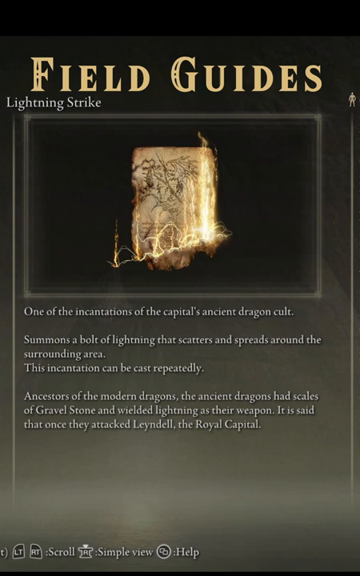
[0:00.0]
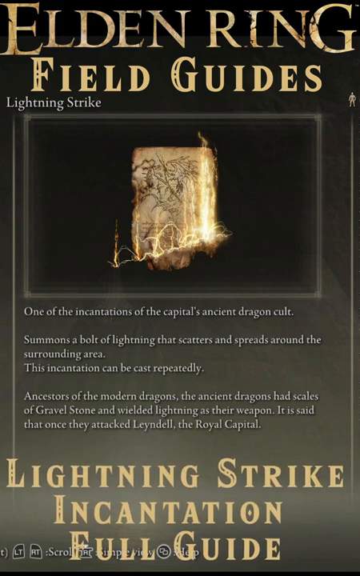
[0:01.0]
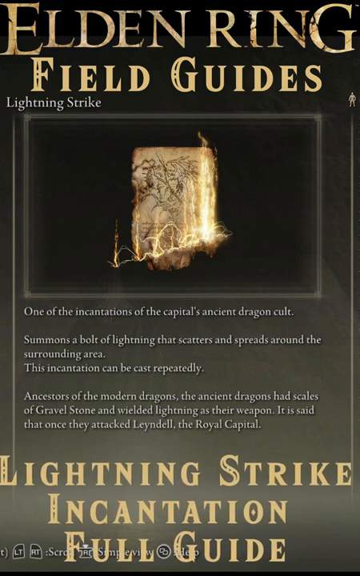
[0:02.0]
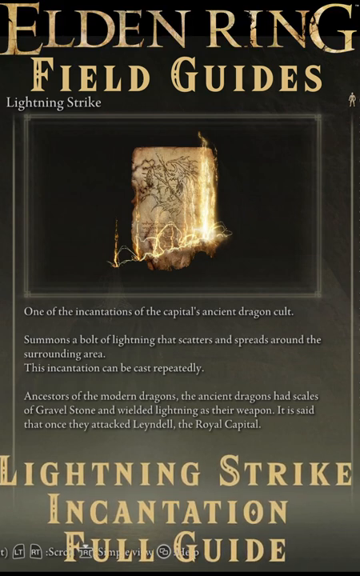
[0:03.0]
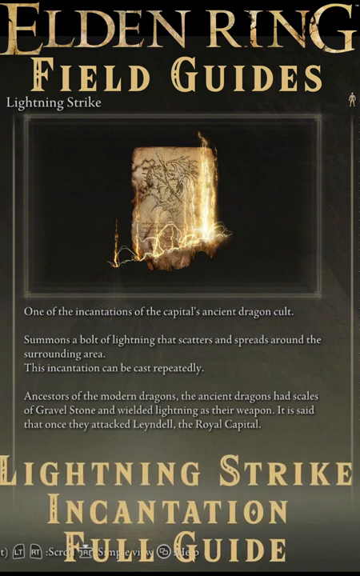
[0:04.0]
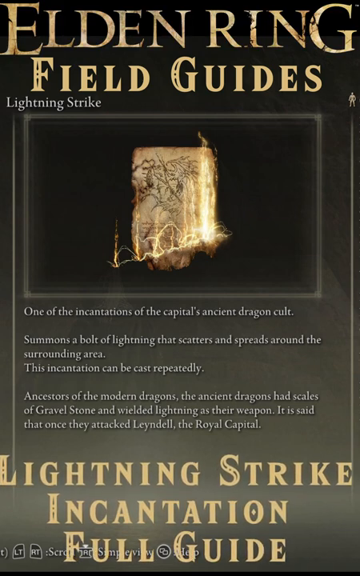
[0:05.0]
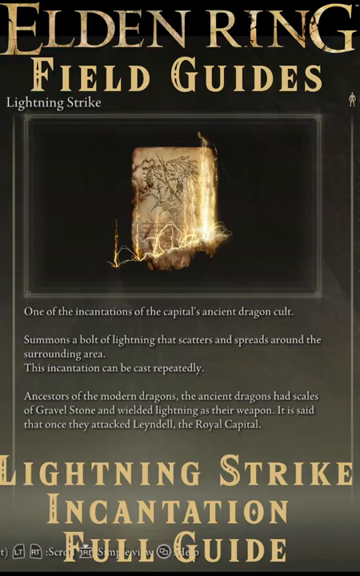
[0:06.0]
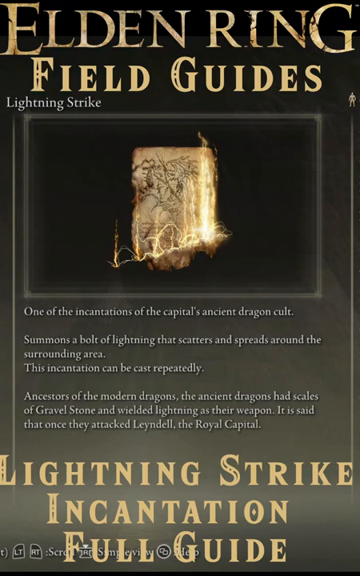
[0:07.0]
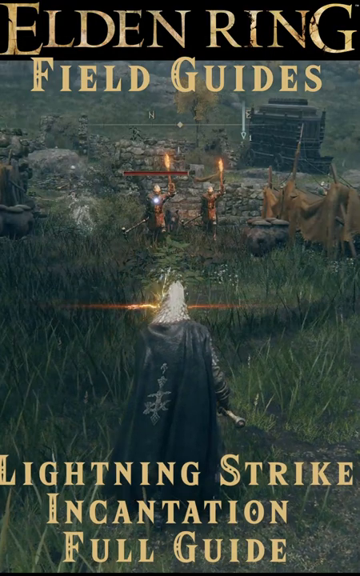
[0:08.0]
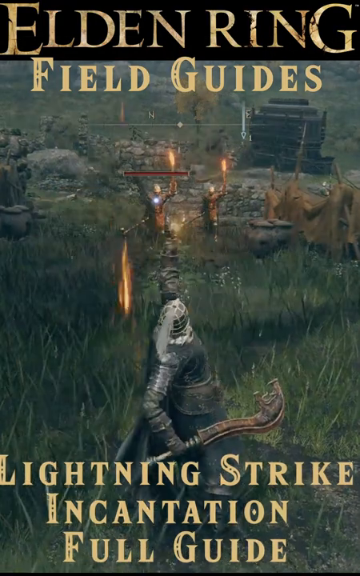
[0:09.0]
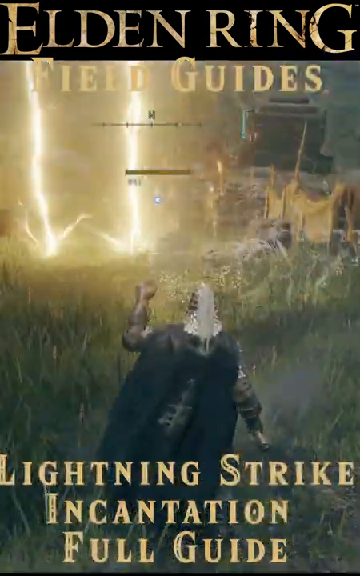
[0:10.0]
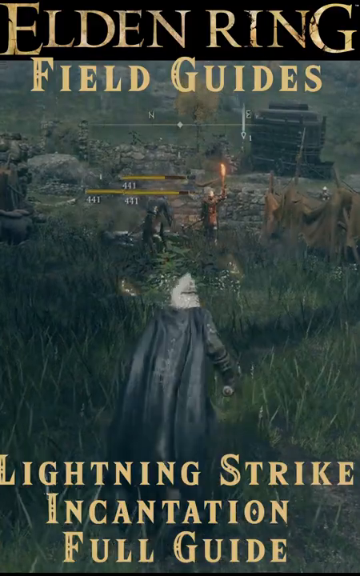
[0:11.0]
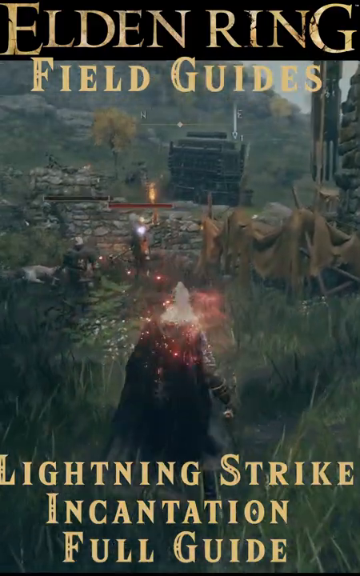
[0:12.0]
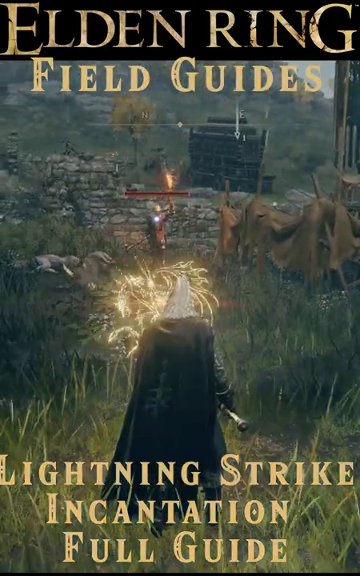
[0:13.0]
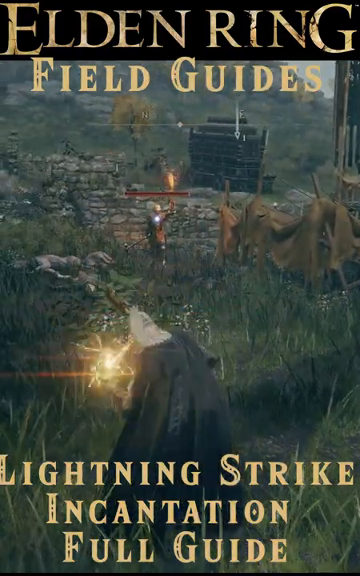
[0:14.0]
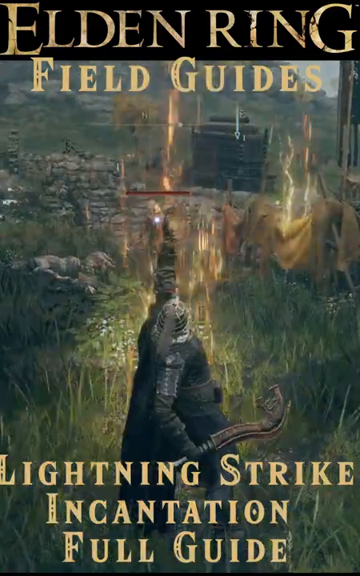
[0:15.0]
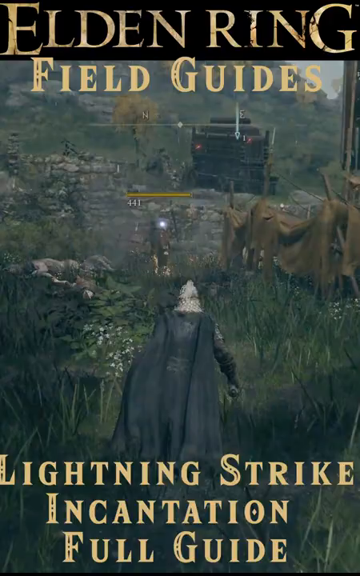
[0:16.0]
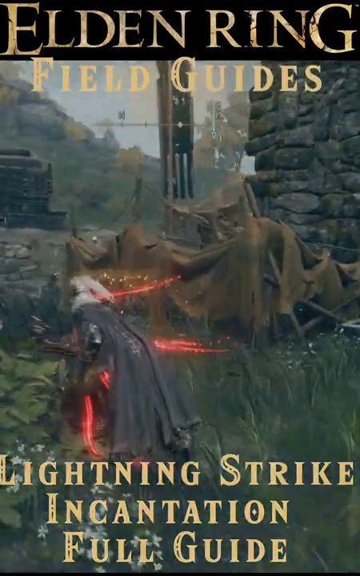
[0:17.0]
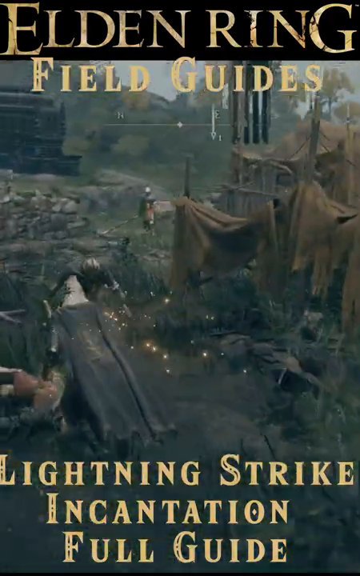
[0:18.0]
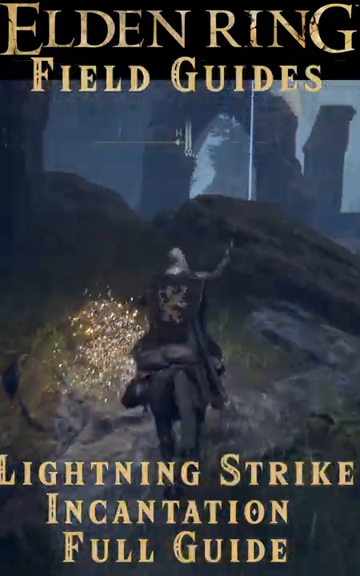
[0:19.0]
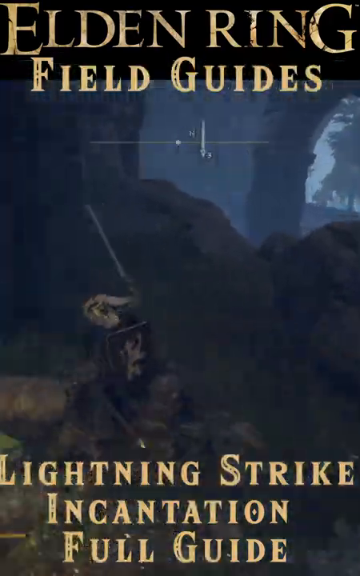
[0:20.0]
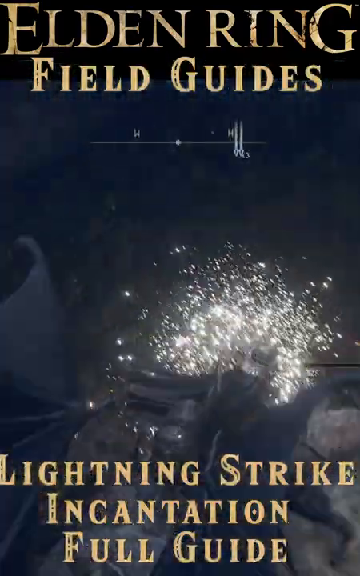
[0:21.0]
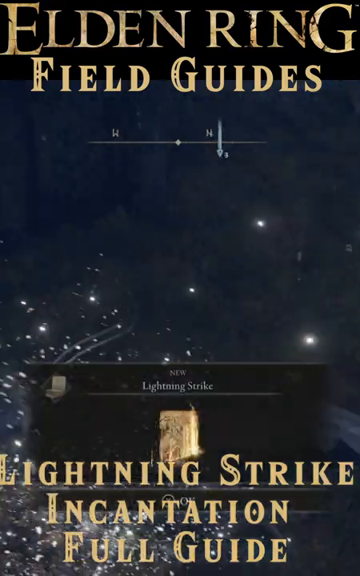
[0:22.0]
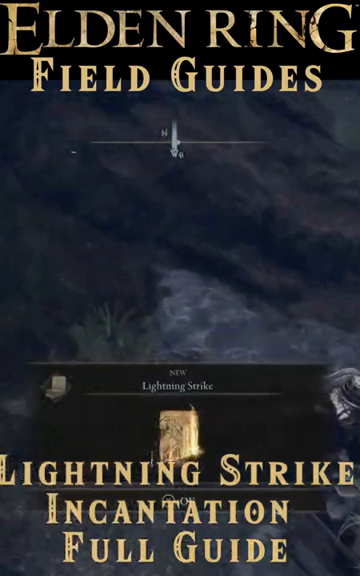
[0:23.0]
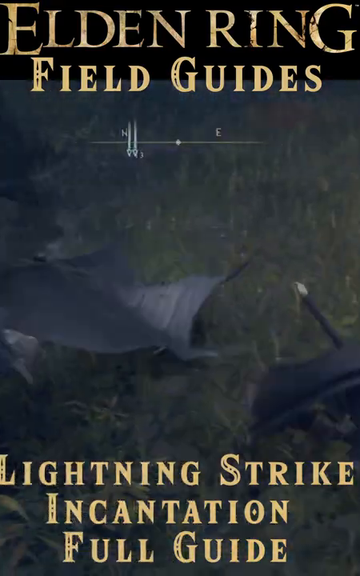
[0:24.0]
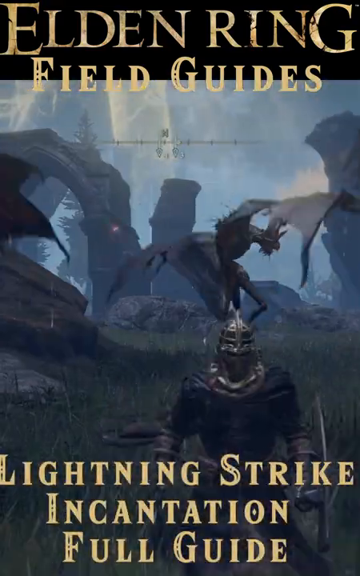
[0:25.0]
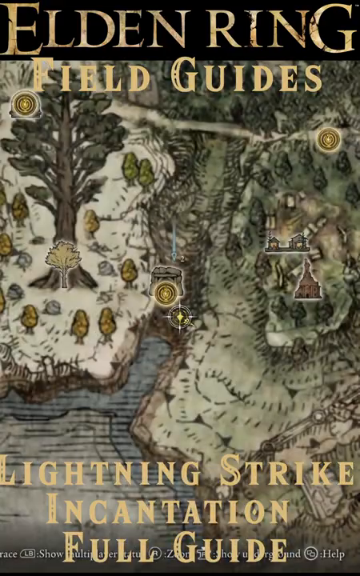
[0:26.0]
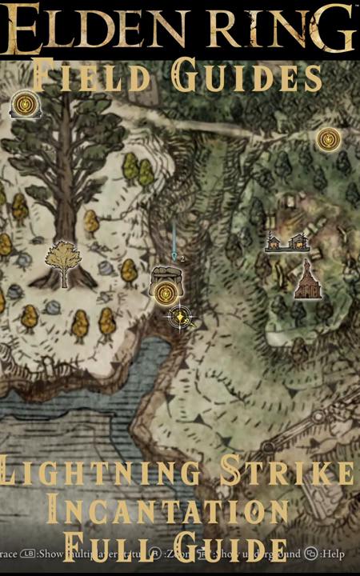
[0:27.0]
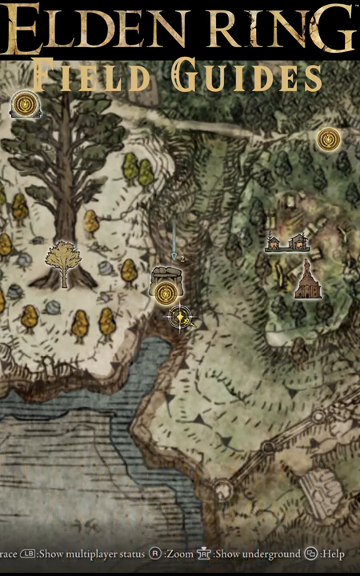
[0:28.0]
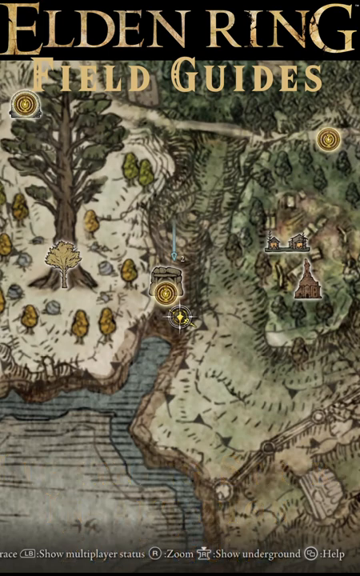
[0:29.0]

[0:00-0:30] The video is a guide for Elden Ring. It opens with a card that reads "Elden Ring Field Guides Lightning Strike Incantation Full Guide," and this text stays on screen throughout the video. The card shows lightning strike along with a description of what it is in-game. The video then cuts to a scene from Elden Ring, apparently of the playable character, who wears a cape and seems to be doing lightning strikes in a grassy field. He appears to be casting on a training dummy, or possibly just some random people in the field. It is raining, and lightning strikes down whenever he casts; in this first casting scene the lightning comes down in multiple areas at once. The cape is long, covering the whole length of the character down to the very end. The video then cuts to him in a different area riding a horse, which he rides in a circle while casting, and at the end he is fighting a dragon.